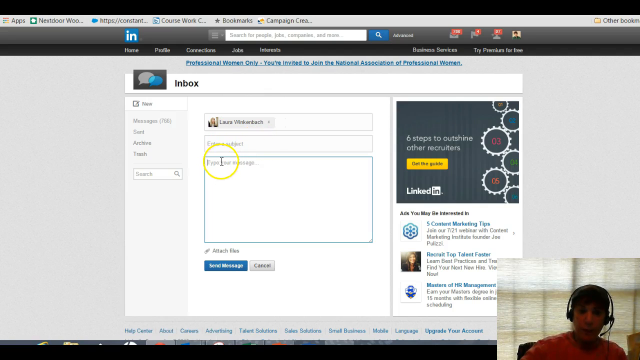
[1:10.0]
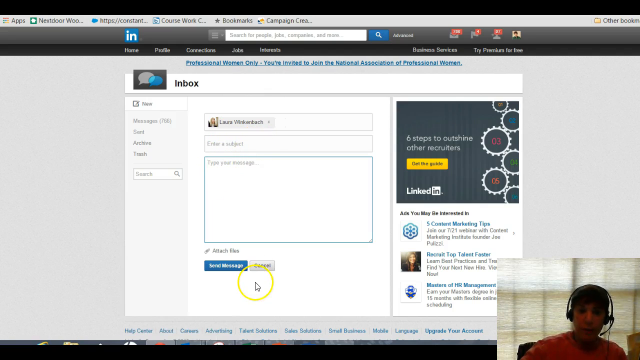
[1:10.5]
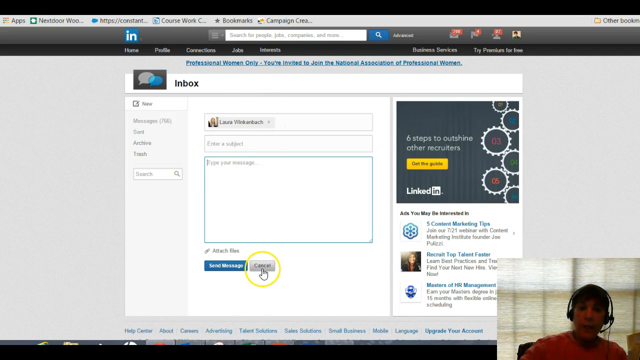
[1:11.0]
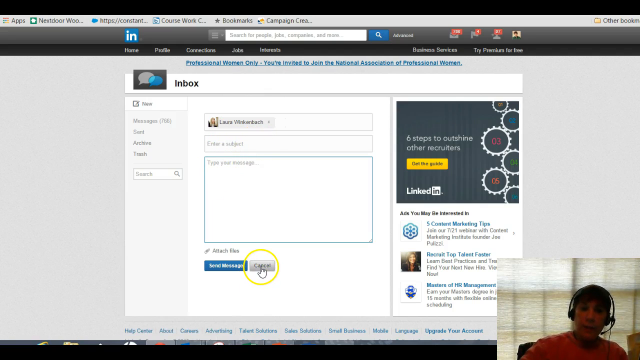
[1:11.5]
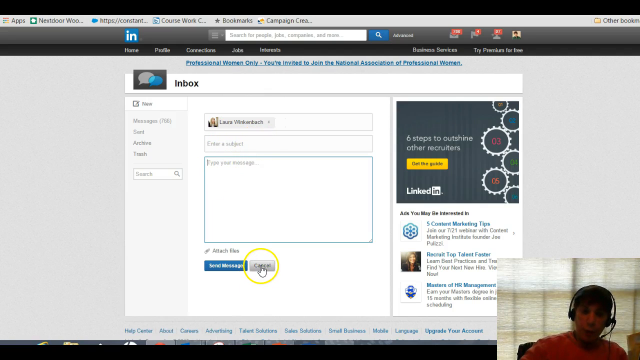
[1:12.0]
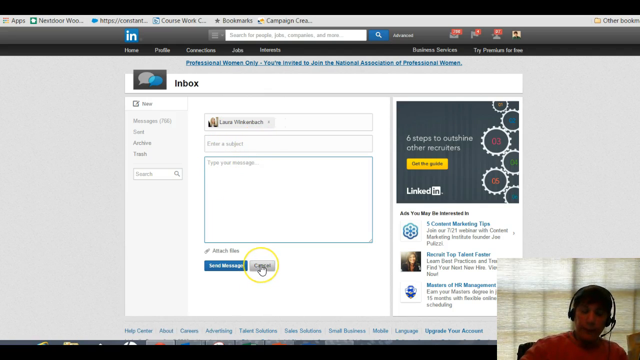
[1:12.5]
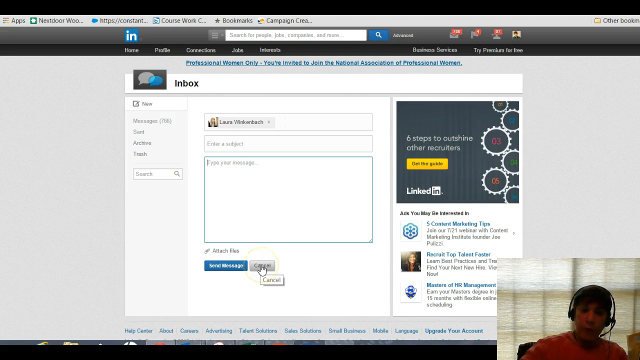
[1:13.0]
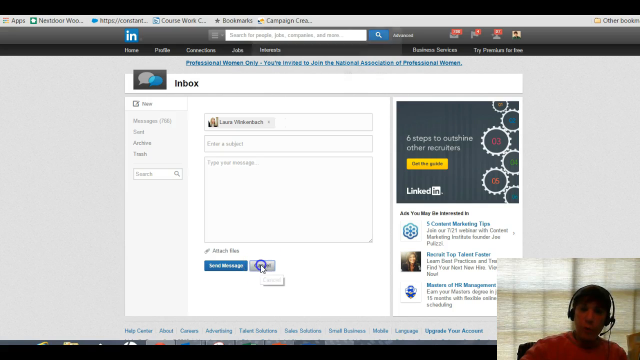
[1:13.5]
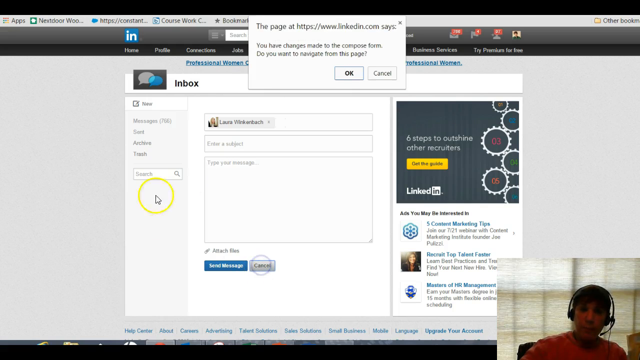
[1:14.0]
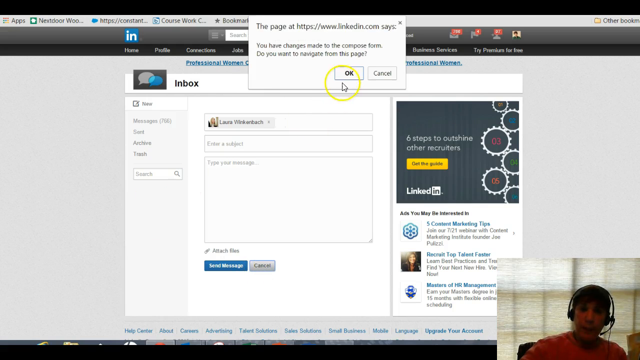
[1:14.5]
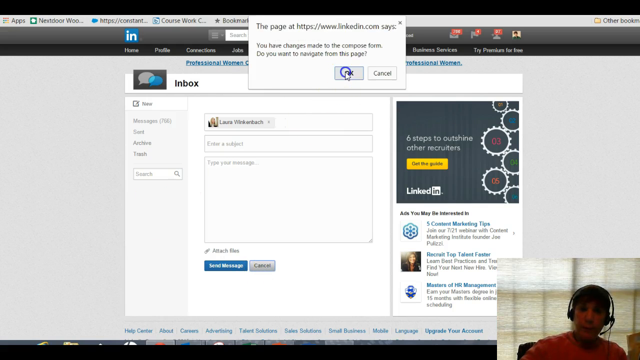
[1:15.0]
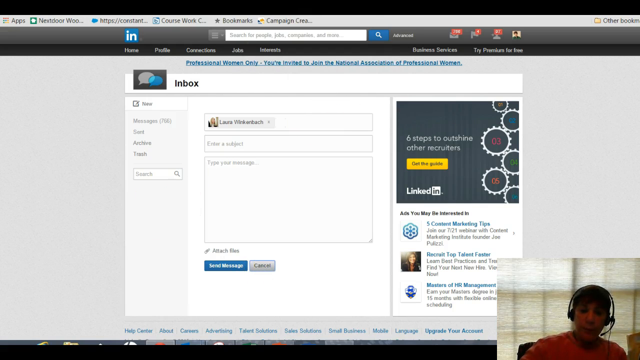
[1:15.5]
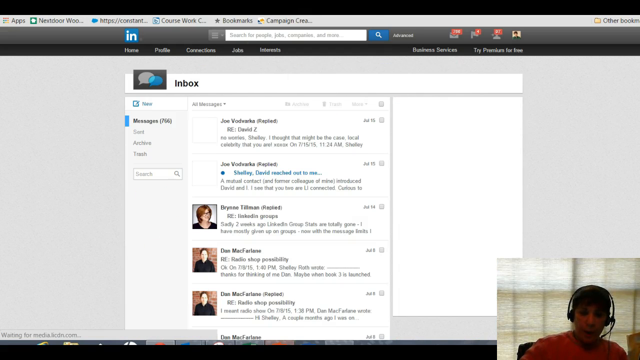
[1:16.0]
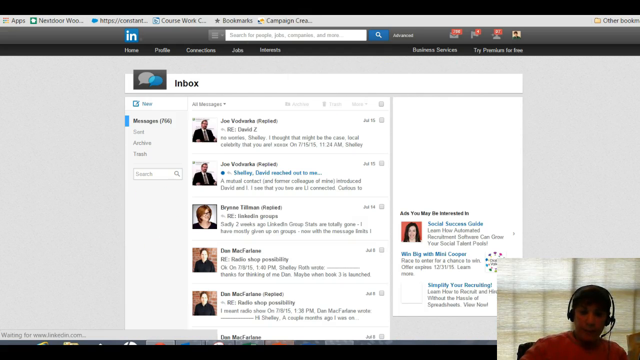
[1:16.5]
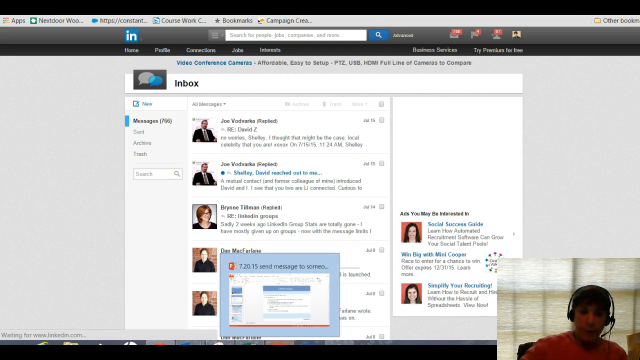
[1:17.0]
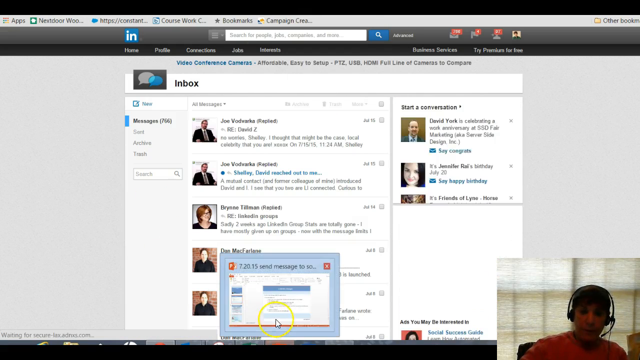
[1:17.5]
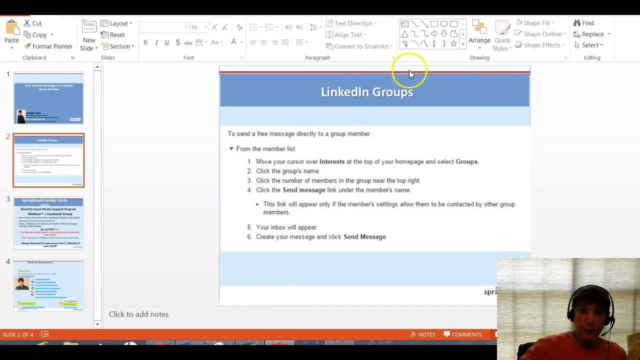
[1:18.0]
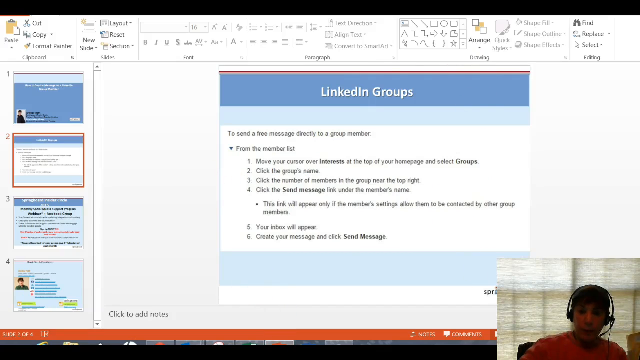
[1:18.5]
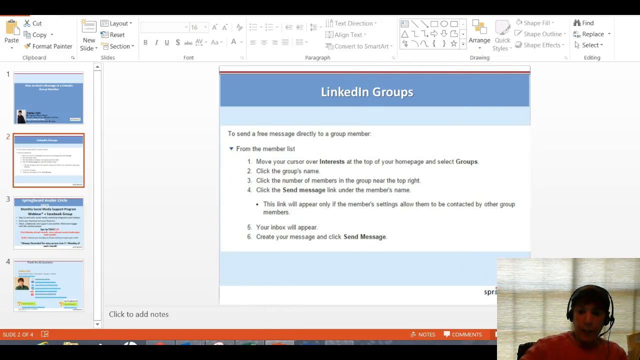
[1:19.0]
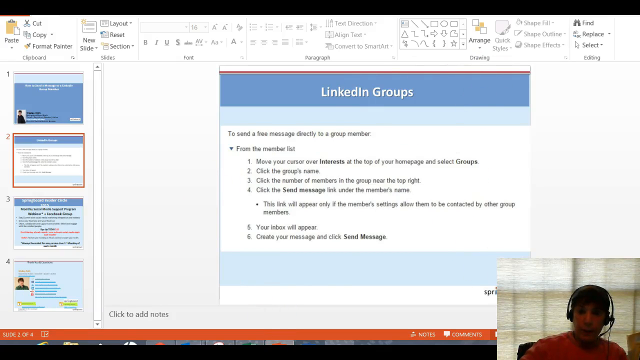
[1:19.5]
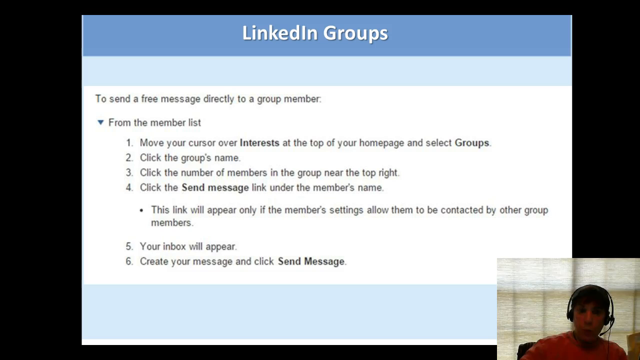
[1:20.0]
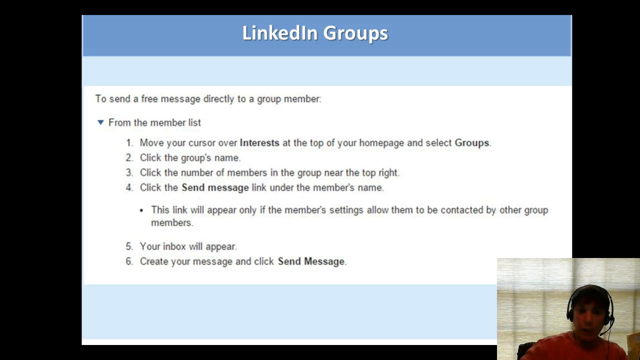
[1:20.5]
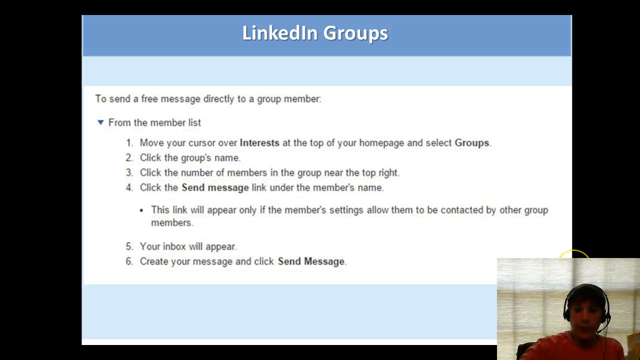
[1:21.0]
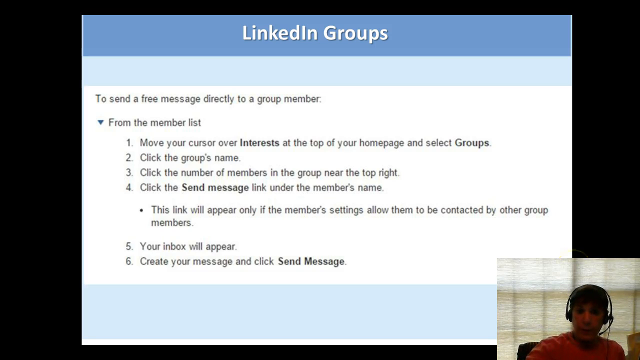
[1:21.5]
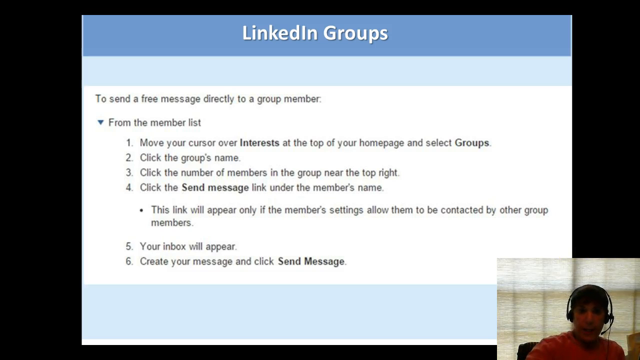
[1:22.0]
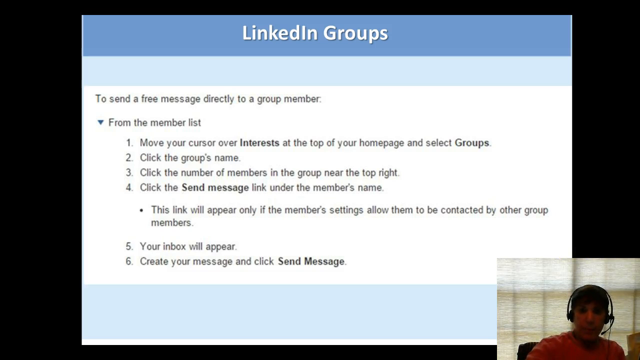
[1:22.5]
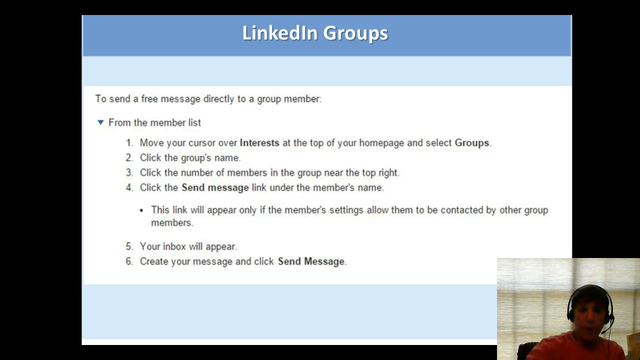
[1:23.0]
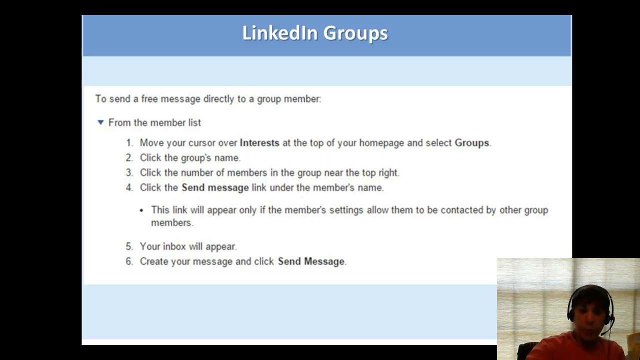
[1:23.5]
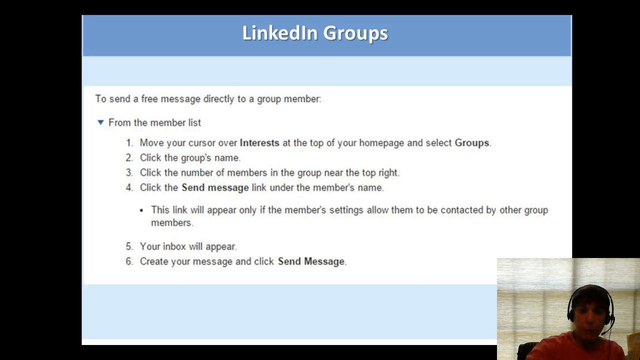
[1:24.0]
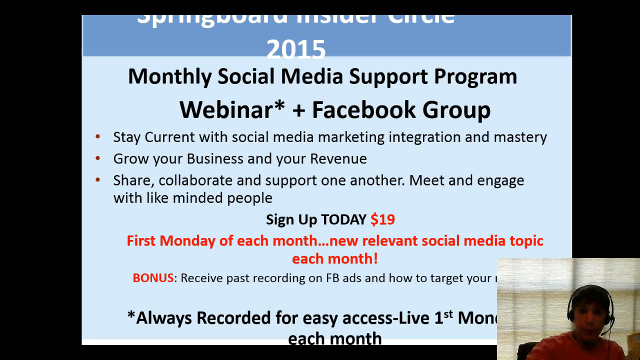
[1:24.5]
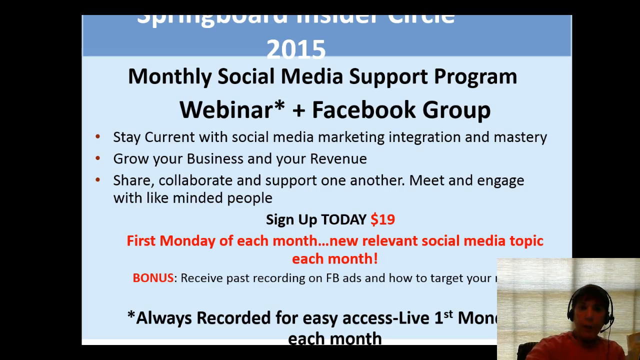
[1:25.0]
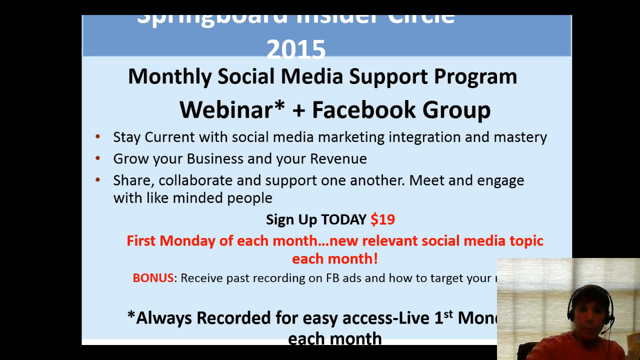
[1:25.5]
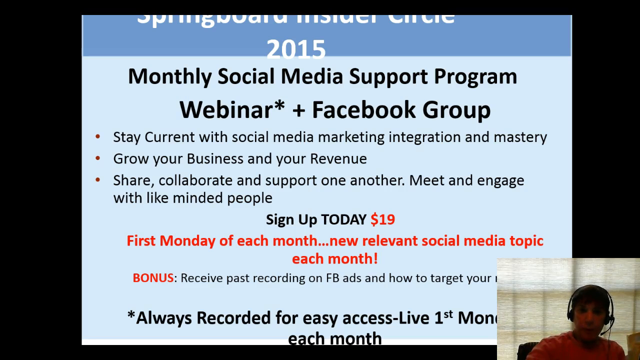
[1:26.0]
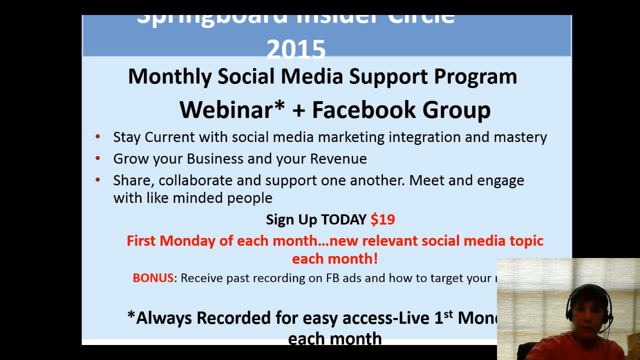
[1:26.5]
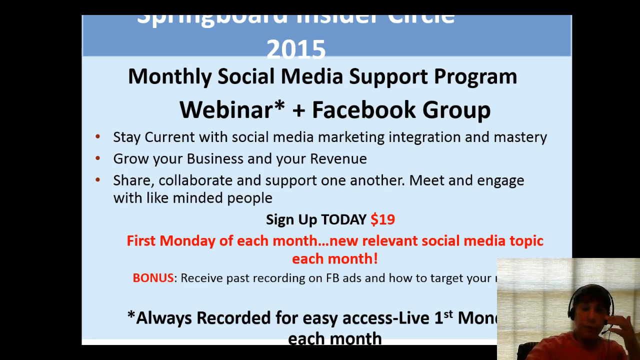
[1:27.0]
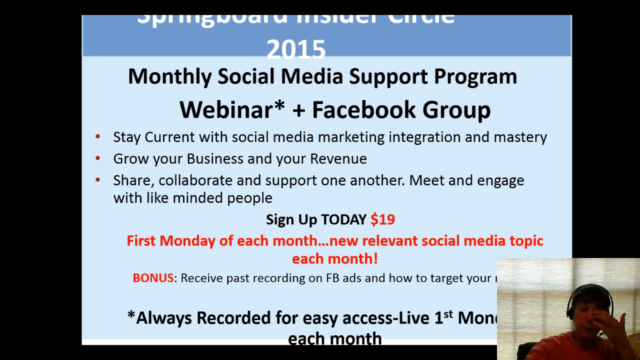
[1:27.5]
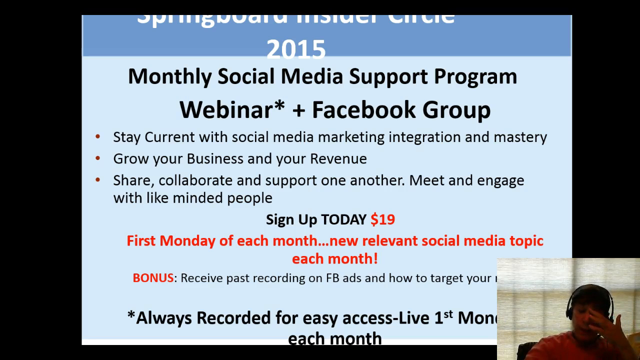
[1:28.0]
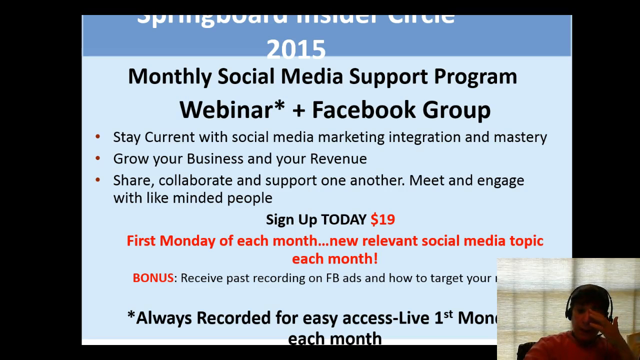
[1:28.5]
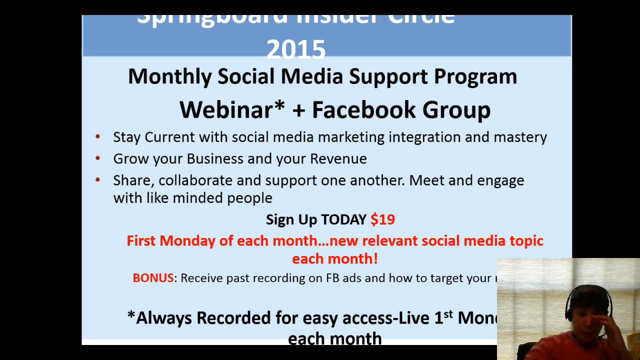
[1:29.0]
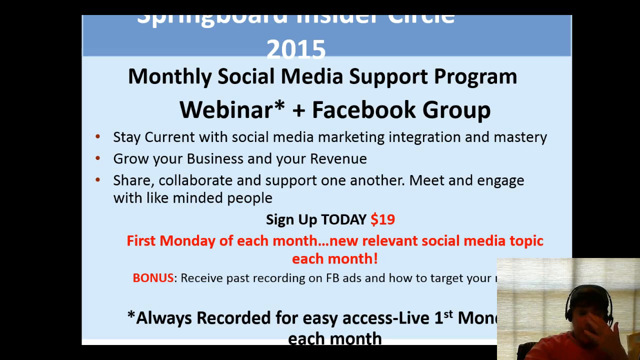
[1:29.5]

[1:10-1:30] Someone records their computer screen while in the inbox of their LinkedIn profile. Their mouse cursor is surrounded by a yellow circle. The message recipient is Laura Winkenbach, and there is a subject line text box and a message text box. The user moves the cursor down toward two buttons, one reading "send message" and the other "cancel," mouses over "cancel" and clicks it. A browser pop-up appears that reads "The page at https://www.linkedin.com says" and asks "Do you wish to navigate from this page?" The user clicks "okay" and returns to the inbox with various messages in it. They then open a new window, which looks to be a Microsoft slide program, showing a slide that reads "LinkedIn groups. To send a free message directly to a group member from the member list, move your cursor over interests at the top of your homepage and select groups. Click the group's name. Click the number of members in the group near the top right. Click the send message link under the member's name. This link will appear only if the member settings allow them to be contacted by other group members. Your inbox will appear, create your message and click send." A new slide appears that reads "Springboard Insider Circle 2015, monthly social media support program, webinar, plus Facebook group. Stay current with social media marketing, integration, and mastery. Grow your business and your revenue. Share, collaborate, and support one another. Meet and engage with like-minded people. Sign up today, $19, first Monday of each month. New relevant social media topic each month. Bonus, receive past recording on Facebook, ads, and how to" and the rest of the text is blocked by the person's webcam in the bottom right corner.